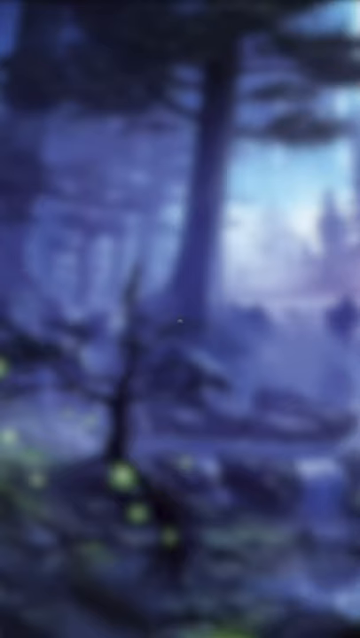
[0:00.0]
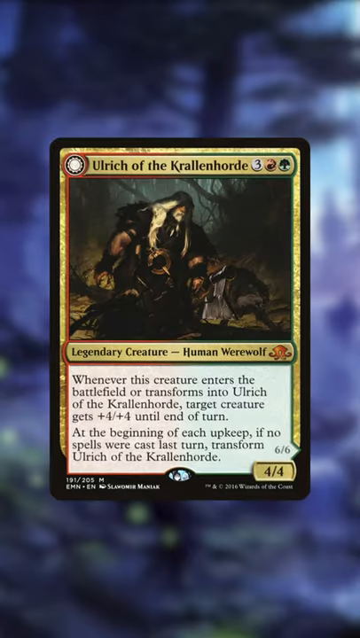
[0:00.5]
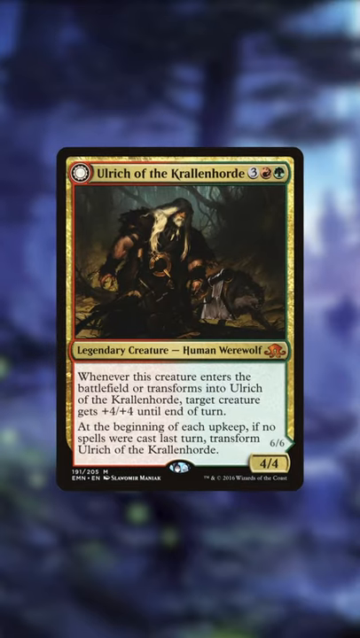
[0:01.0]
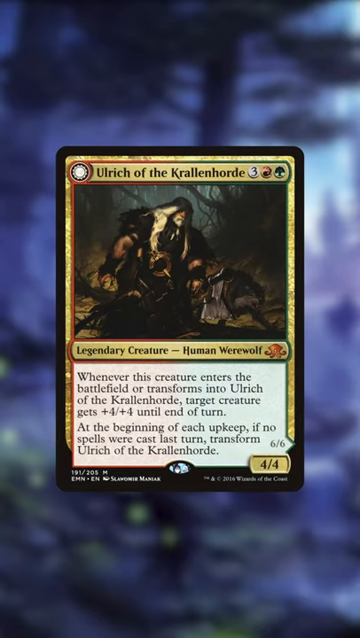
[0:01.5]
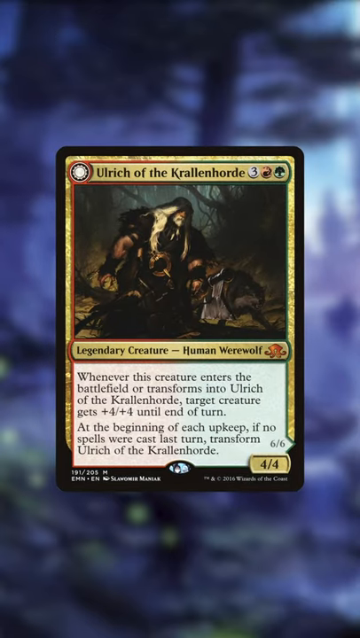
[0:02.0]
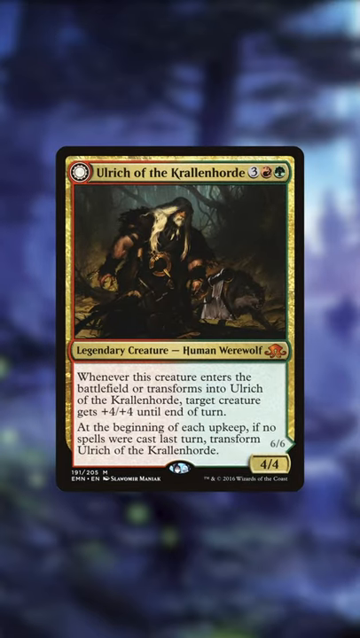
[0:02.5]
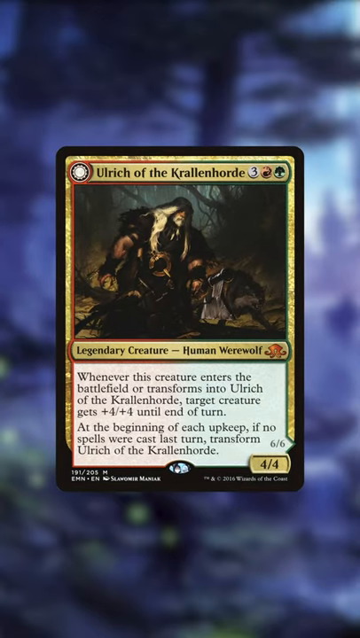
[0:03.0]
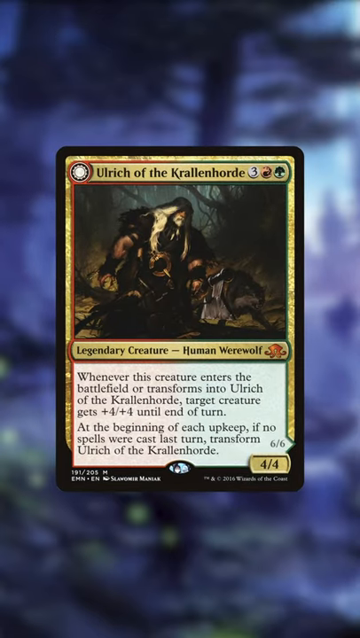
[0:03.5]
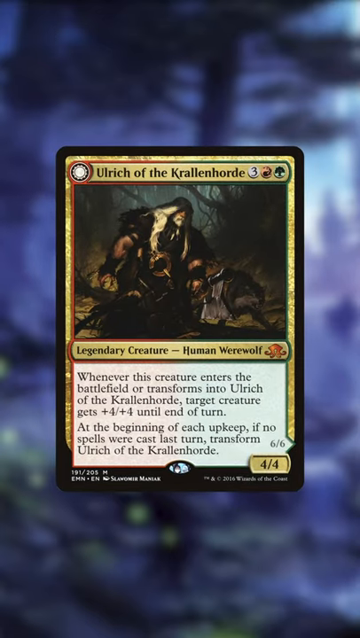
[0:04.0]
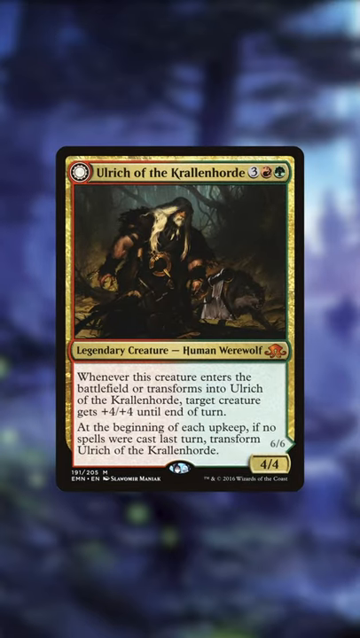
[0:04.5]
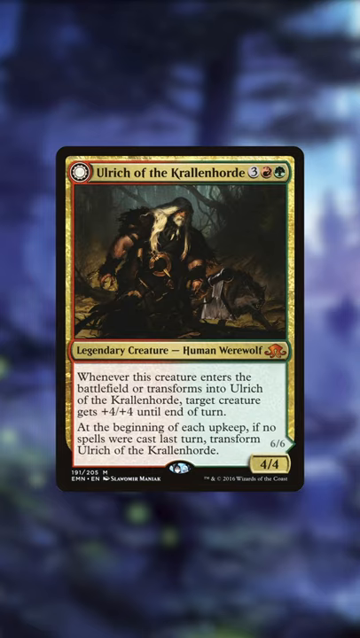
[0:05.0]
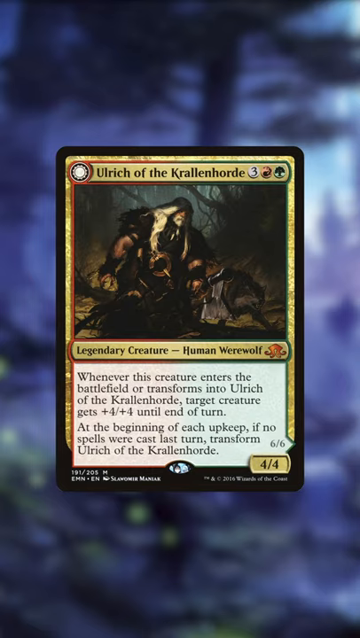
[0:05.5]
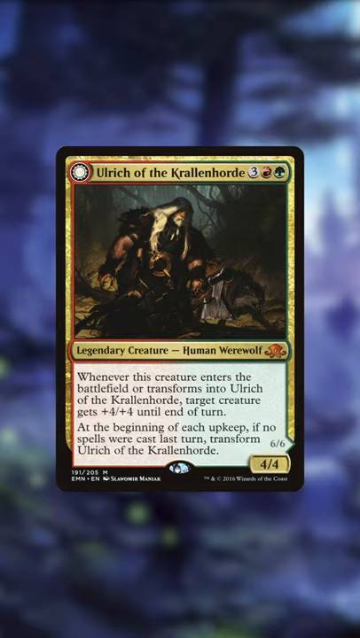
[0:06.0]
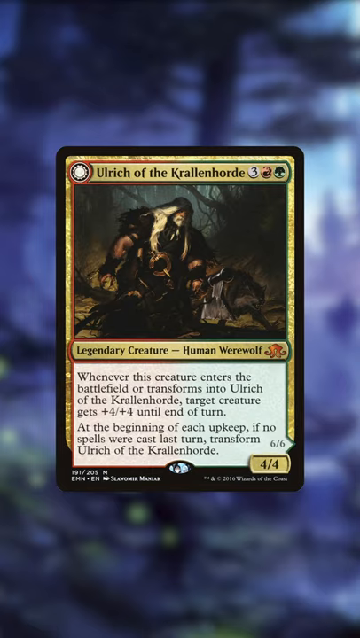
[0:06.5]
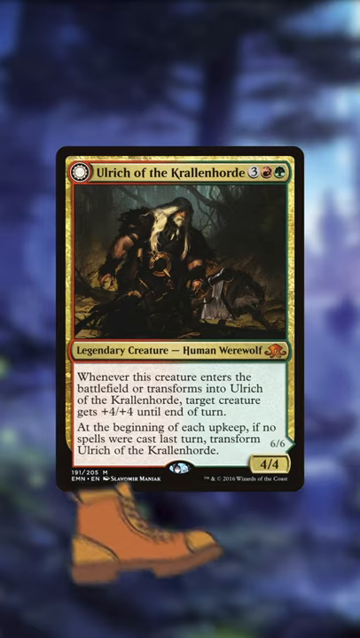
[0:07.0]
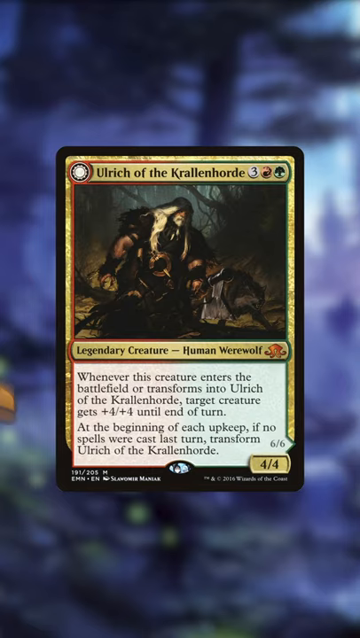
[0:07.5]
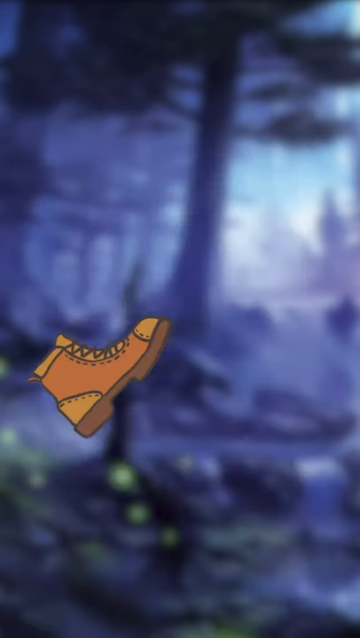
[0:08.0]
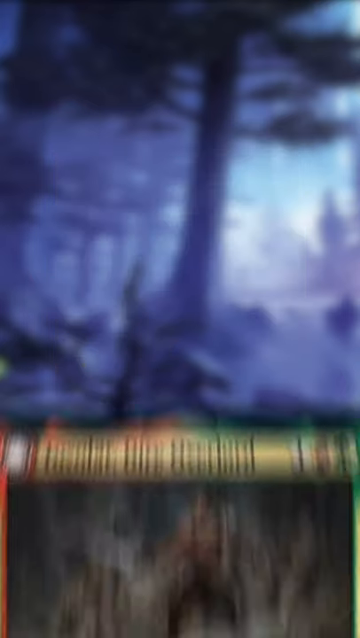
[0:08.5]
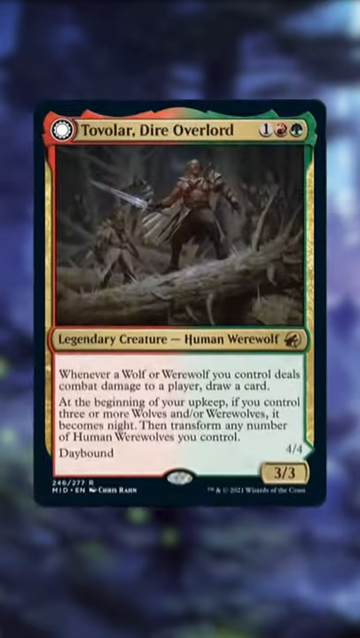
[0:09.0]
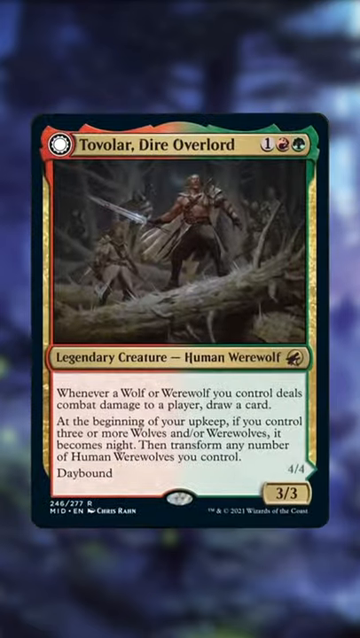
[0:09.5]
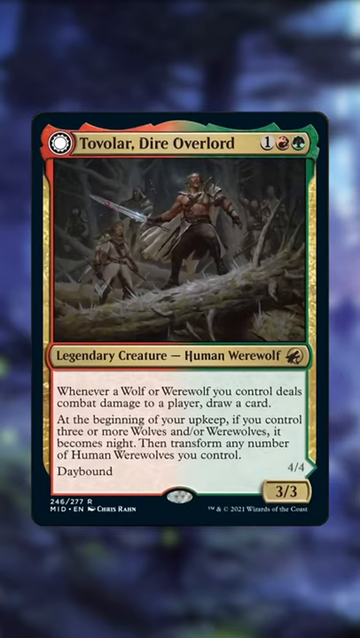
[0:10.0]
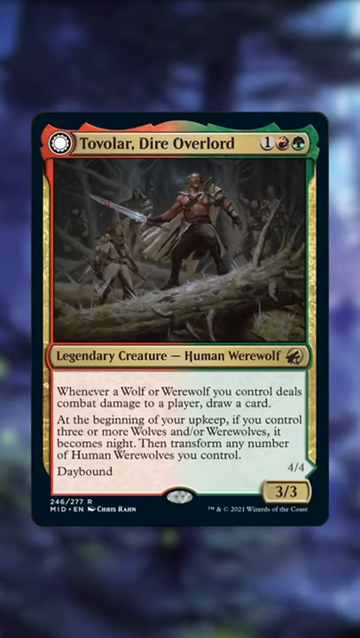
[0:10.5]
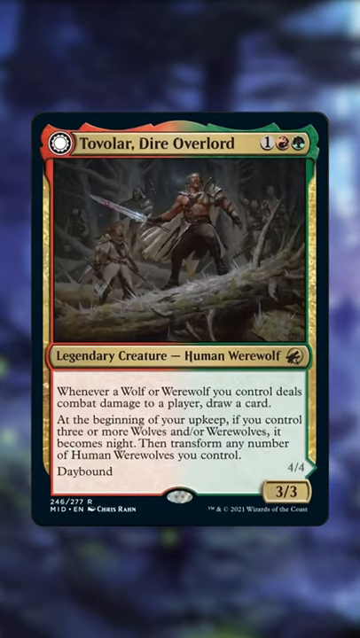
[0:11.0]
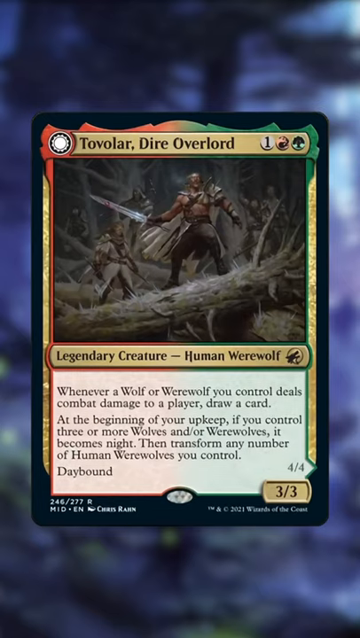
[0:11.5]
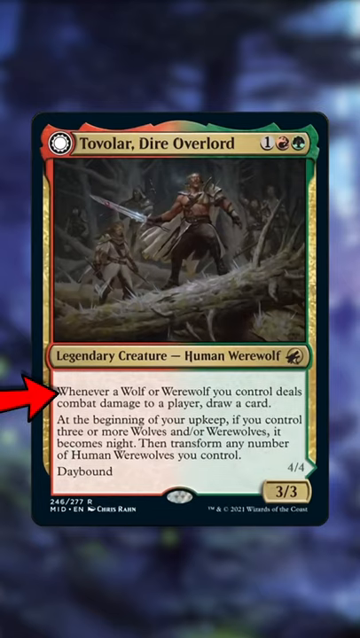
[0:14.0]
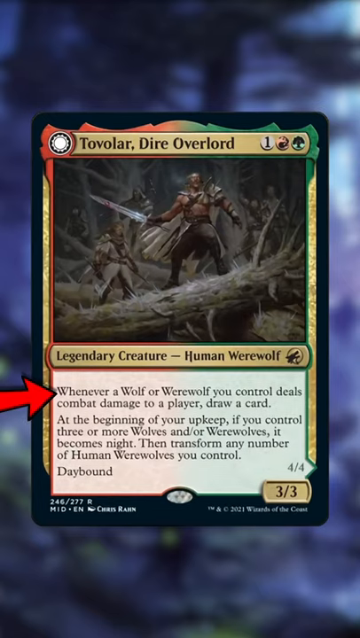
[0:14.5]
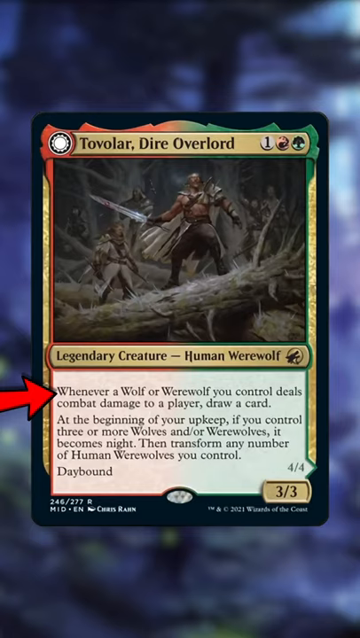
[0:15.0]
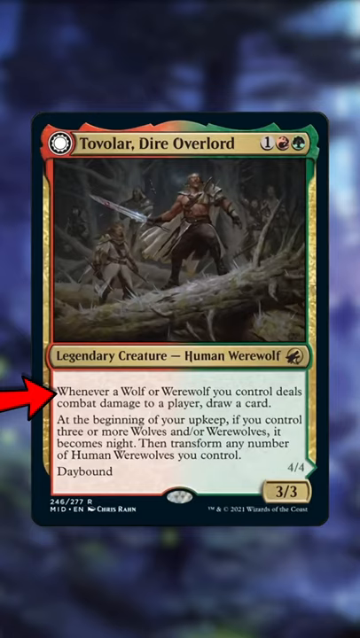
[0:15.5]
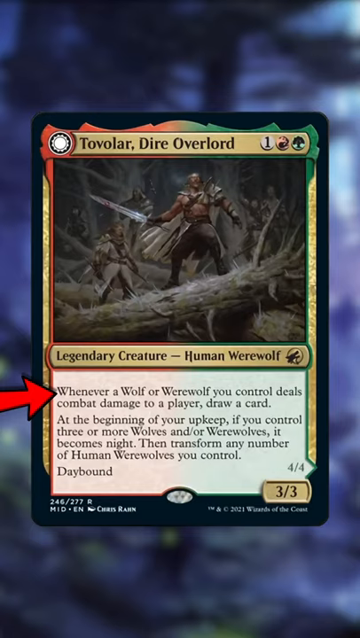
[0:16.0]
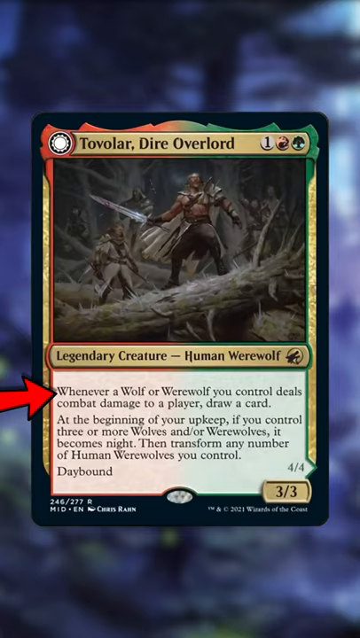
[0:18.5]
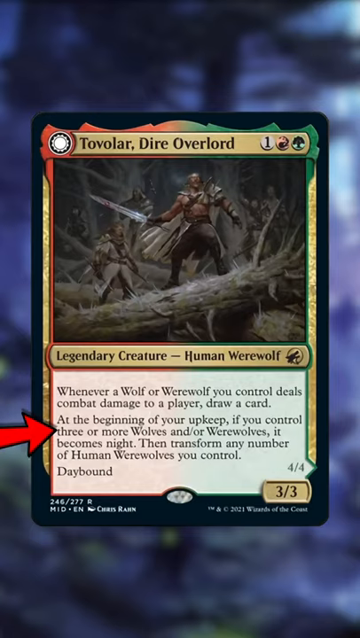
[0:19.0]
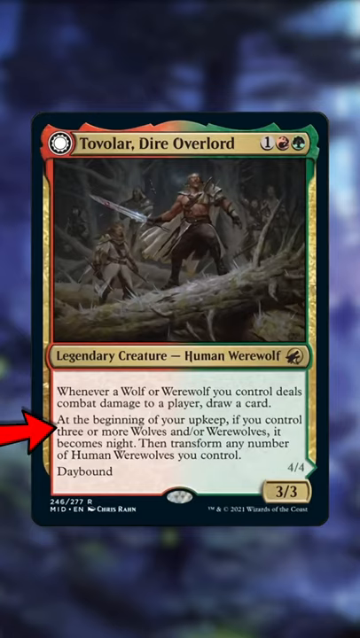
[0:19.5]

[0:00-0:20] What appears to be a Magic the Gathering card game is shown. First a card appears on the screen: a black card with a yellow border that reads "Ulrich of the Crow and Horde." It has a three in the top right corner, a red symbol, and a green tree symbol meaning earth. The art appears to show some sort of barbarian man holding a black weapon of some sort; he has long white hair and a white beard, with a wolf right next to him. The card reads "legendary creature human werewolf" and "Whenever this creature enters the battlefield or transforms into Ulrich of the Crow and Horde target creature gets plus four/plus four until end of turn. At the beginning of each upkeep if no spells were canceled last turn transform Ulrich of the Crow and Horde," with "four out of four" underneath. A boot suddenly appears and kicks the picture away. The view moves to Talavar the Dire Overlord, which has a one, a red symbol and the green mana earth symbol, and is also labeled "legendary creature human werewolf." Its text begins "Whenever a wolf or werewolf you control deals" and includes "at the beginning of your upkeep if you control three or more wolves and werewolves."